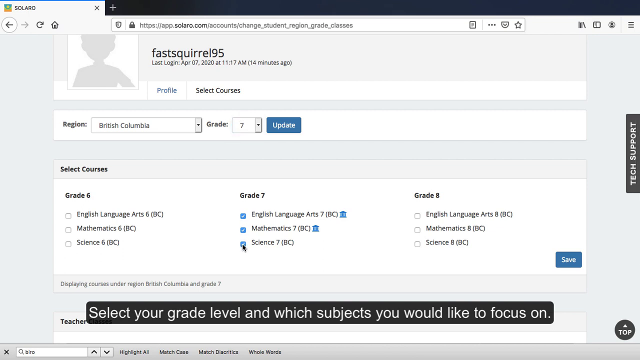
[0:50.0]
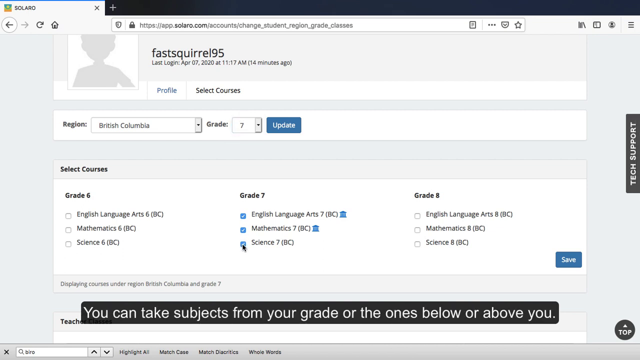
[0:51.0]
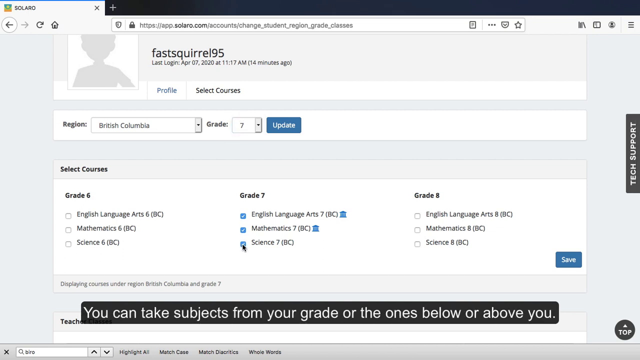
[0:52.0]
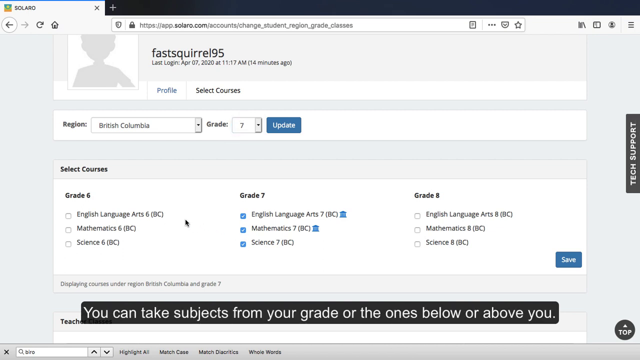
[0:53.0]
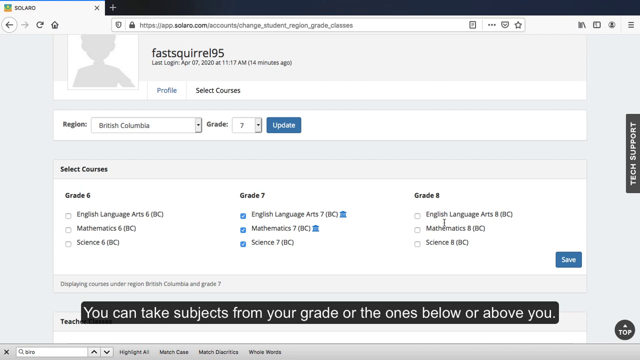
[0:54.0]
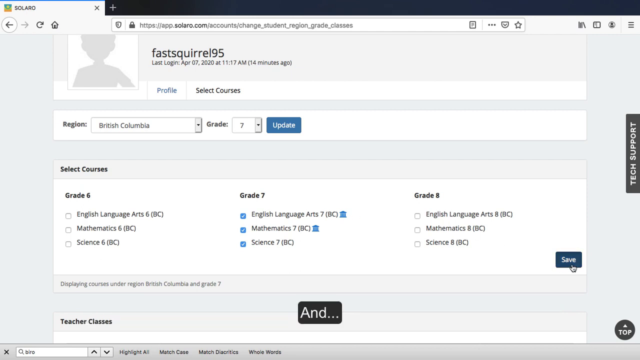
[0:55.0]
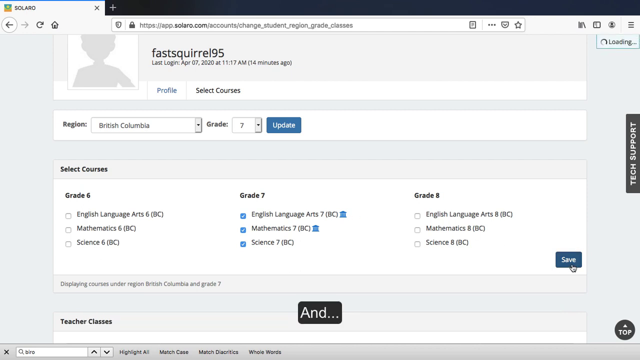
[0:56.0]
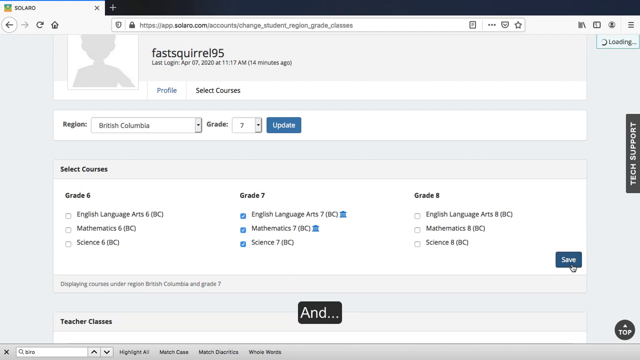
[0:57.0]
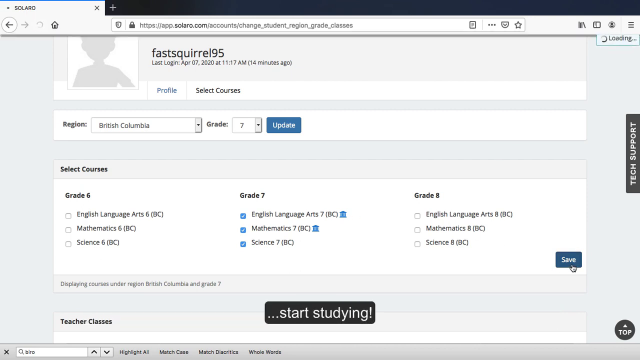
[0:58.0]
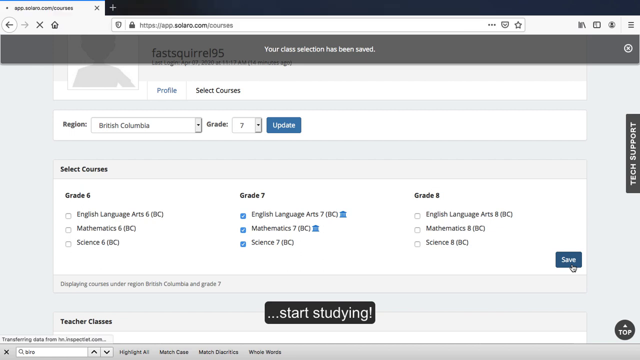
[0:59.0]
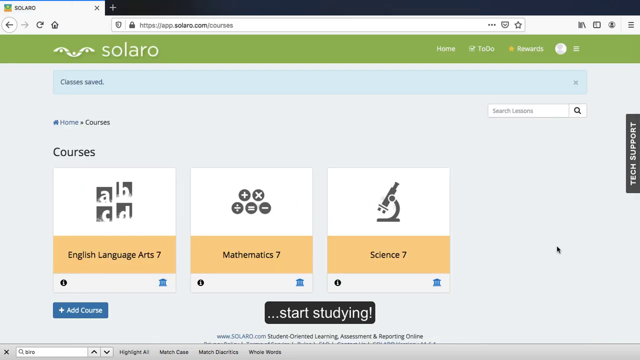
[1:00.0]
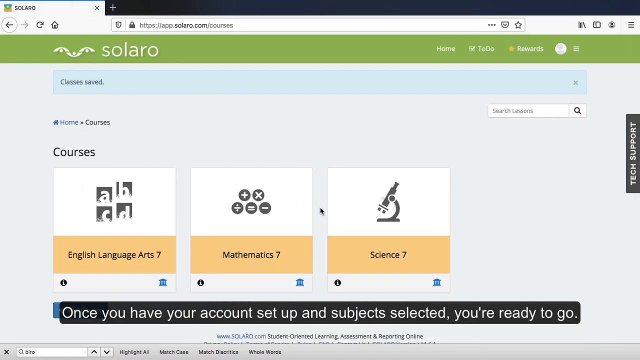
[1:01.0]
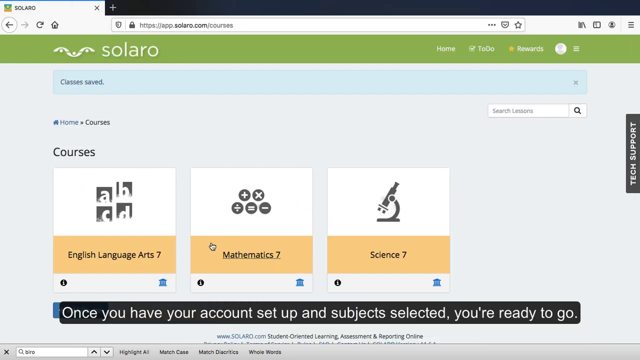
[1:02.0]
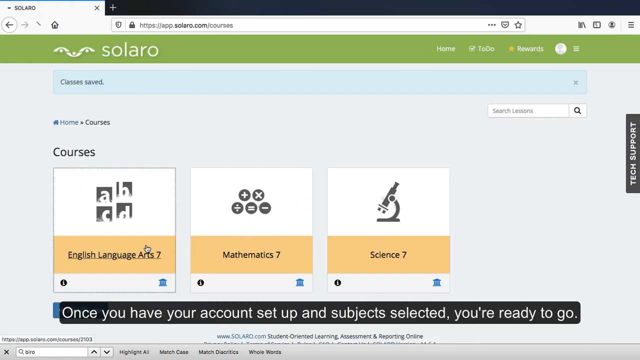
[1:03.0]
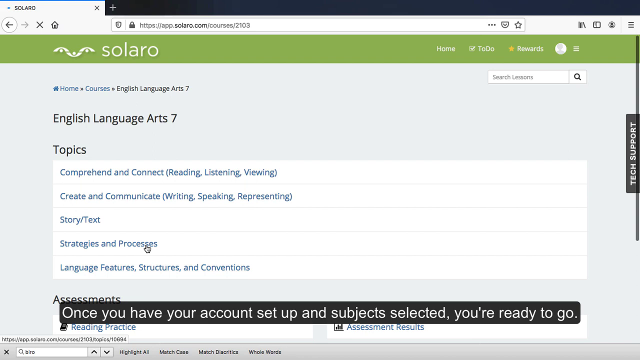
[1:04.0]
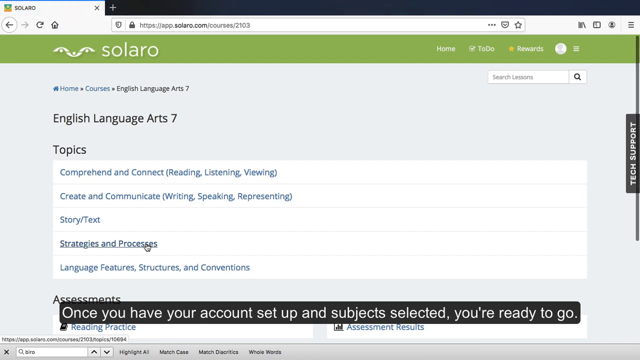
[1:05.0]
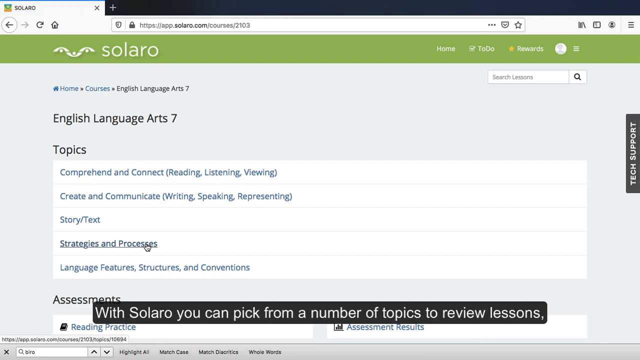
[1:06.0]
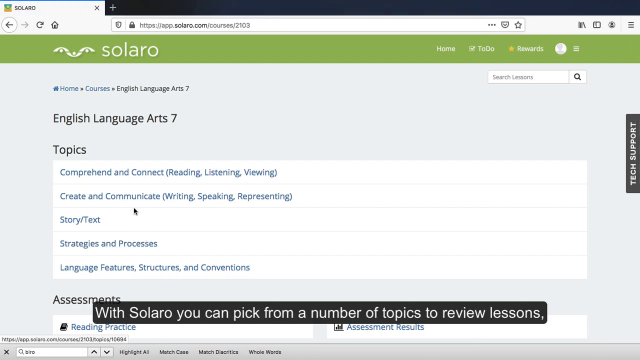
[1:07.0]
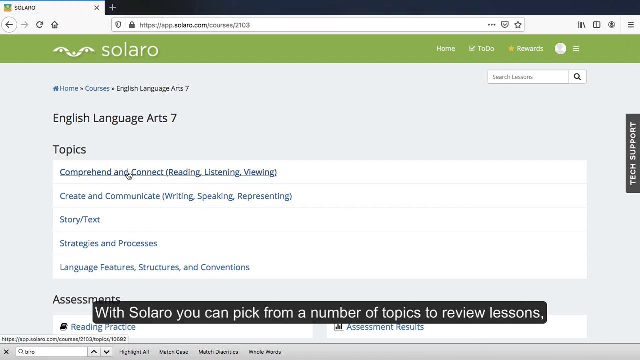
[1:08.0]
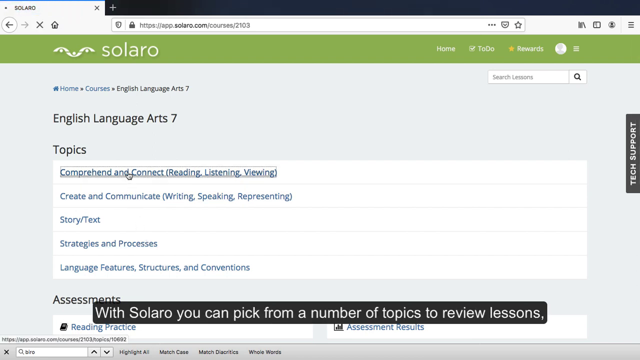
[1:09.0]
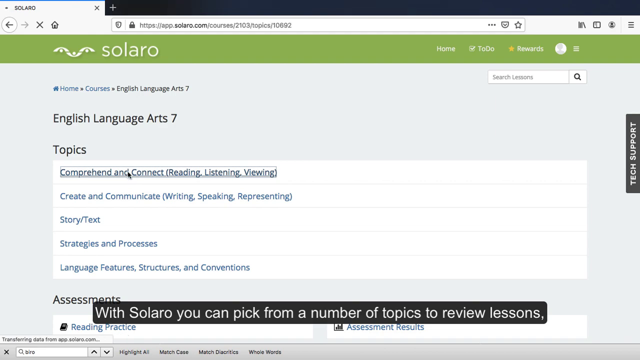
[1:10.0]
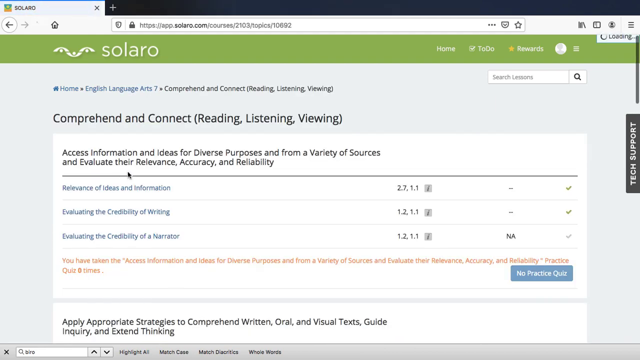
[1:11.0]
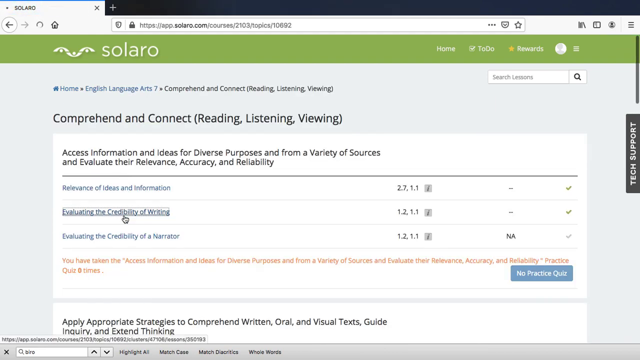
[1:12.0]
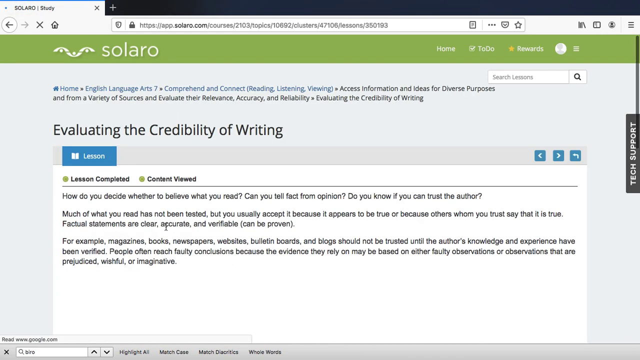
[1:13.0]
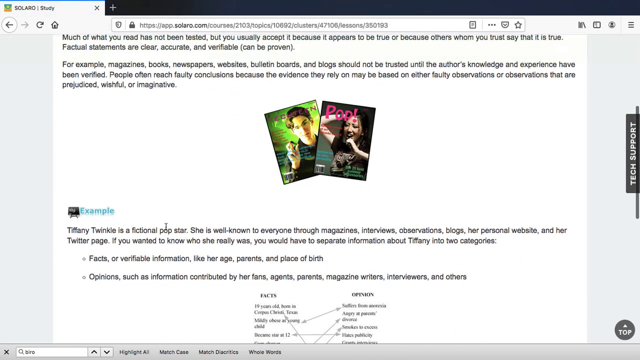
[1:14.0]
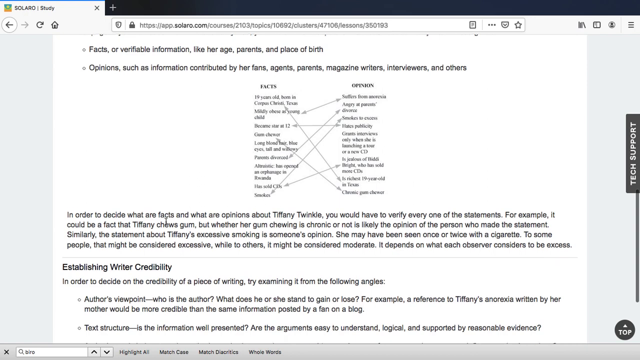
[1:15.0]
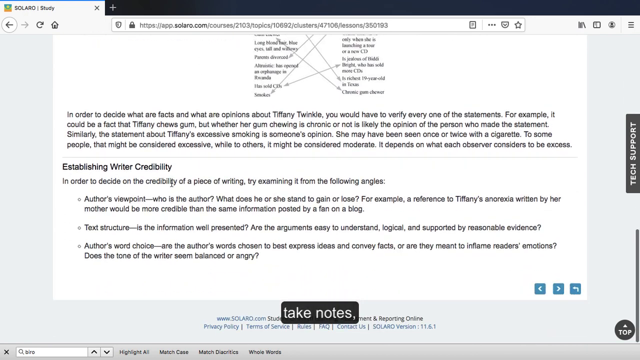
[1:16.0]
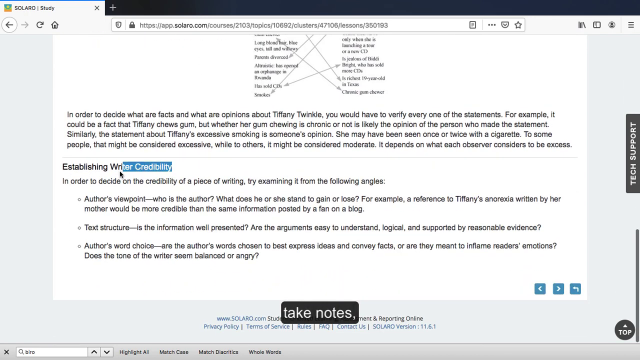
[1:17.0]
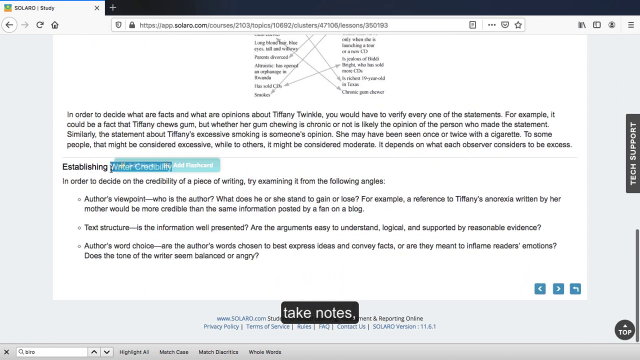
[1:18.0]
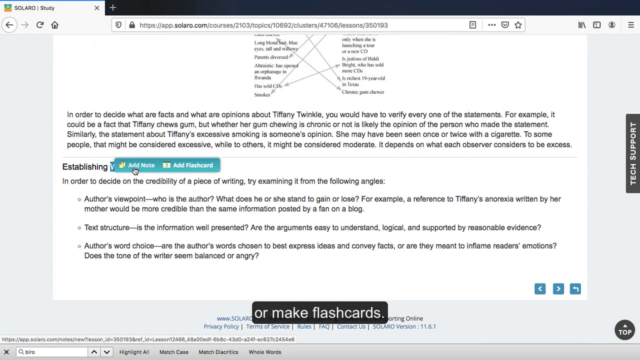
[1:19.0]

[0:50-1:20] The FastSquirrel95 user profile is shown with information saying "you can take subjects from your grade or the ones below or above", listing grade 6, grade 7 and grade 8, with categories under each grade including English Language Arts and Mathematics. The changes are saved and the message "your class selection has been saved" appears. The courses page then shows a new course, Science 7, in addition to English Language Arts 7 and Mathematics 7. More text appears: "once you have your account set up and subjects selected, you're ready to go". The web browser stays on the courses section of Solero.com. An English Language Arts course is clicked, showing course information including a textbook and notes. No people appear.